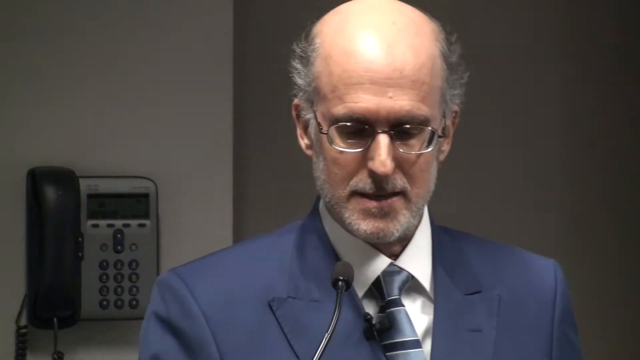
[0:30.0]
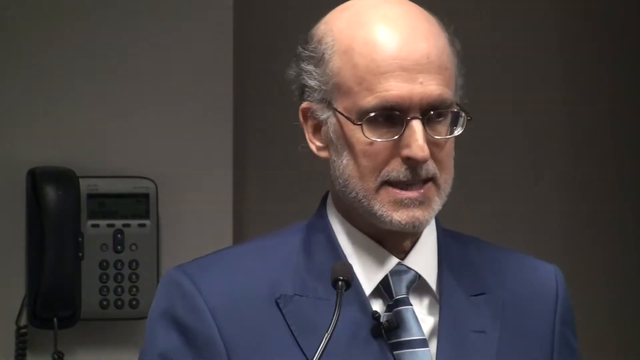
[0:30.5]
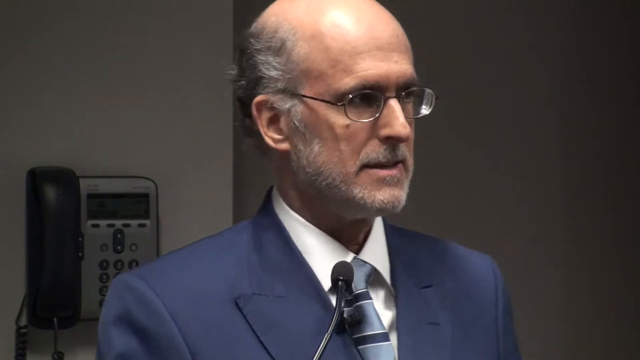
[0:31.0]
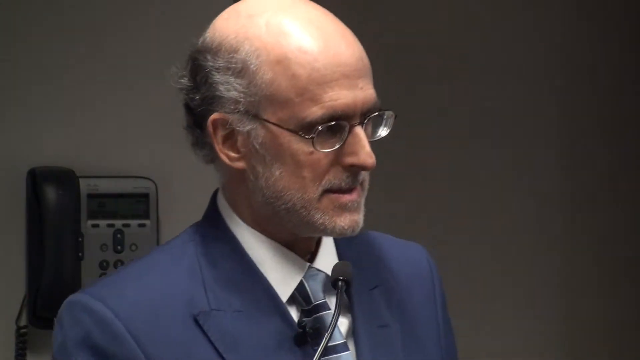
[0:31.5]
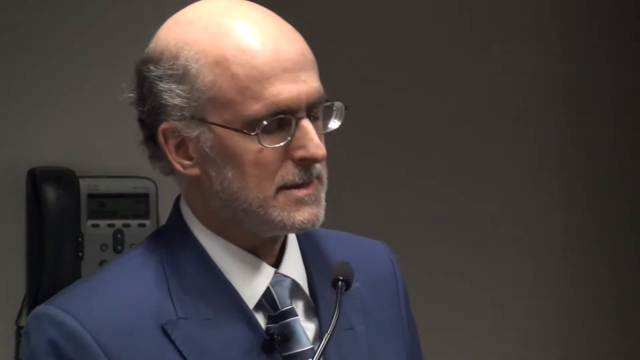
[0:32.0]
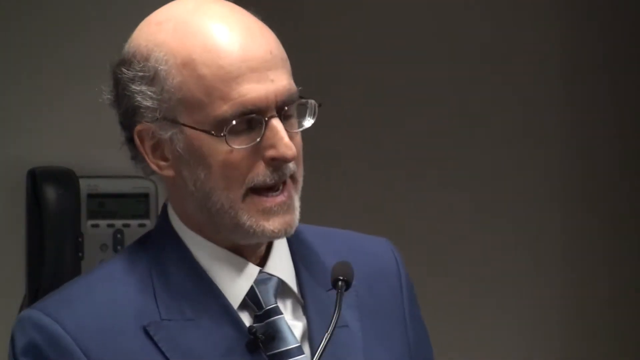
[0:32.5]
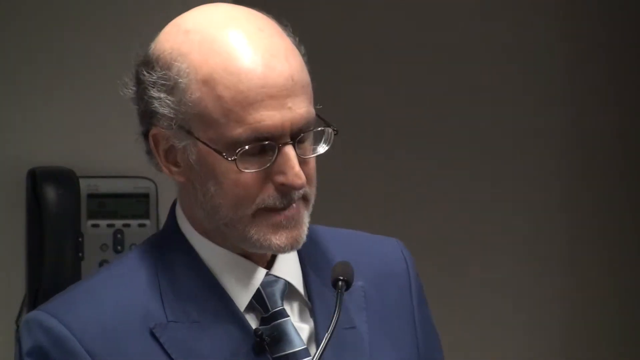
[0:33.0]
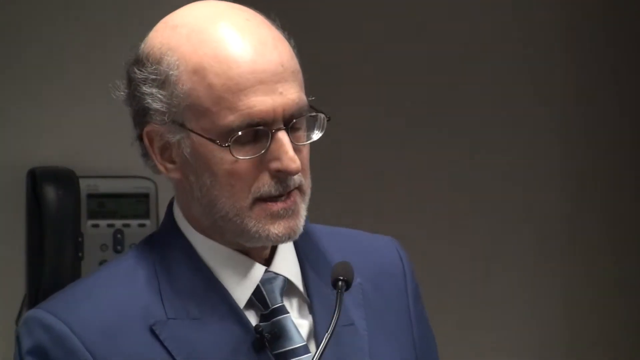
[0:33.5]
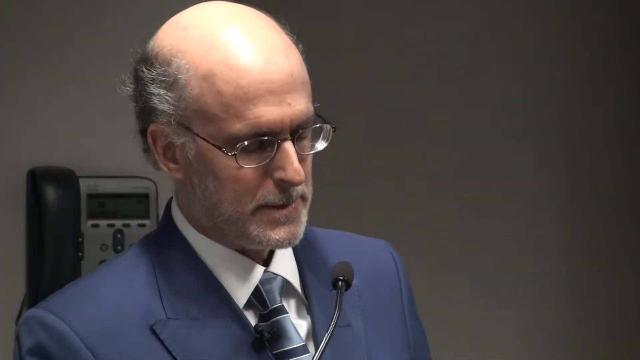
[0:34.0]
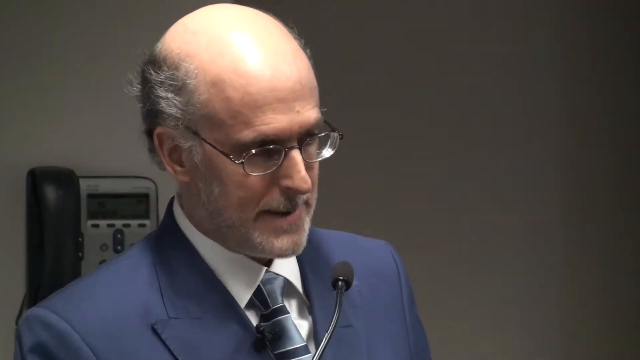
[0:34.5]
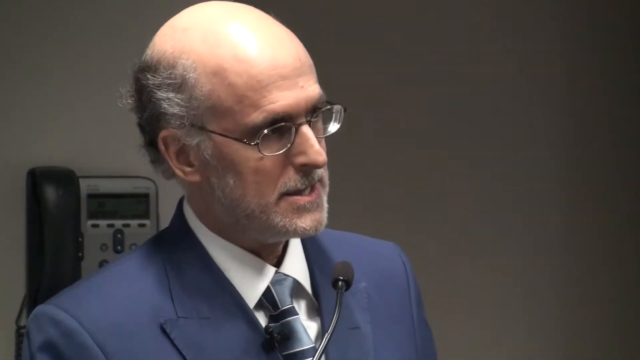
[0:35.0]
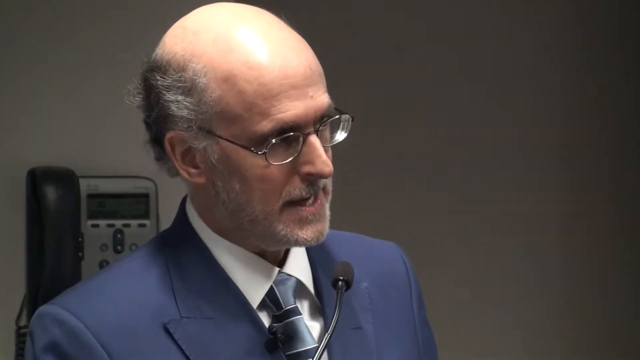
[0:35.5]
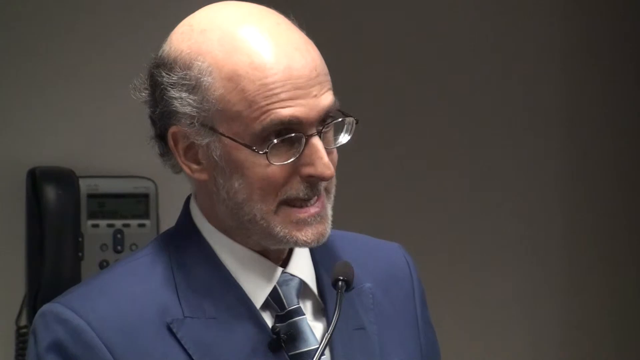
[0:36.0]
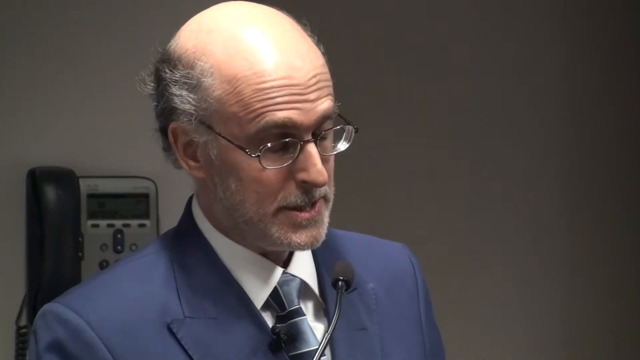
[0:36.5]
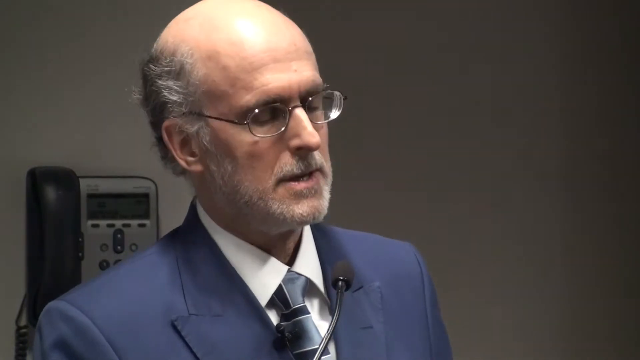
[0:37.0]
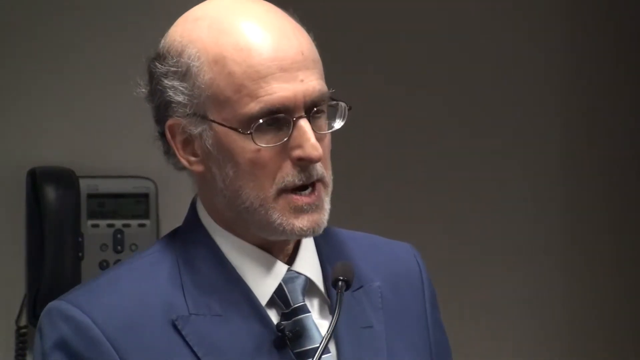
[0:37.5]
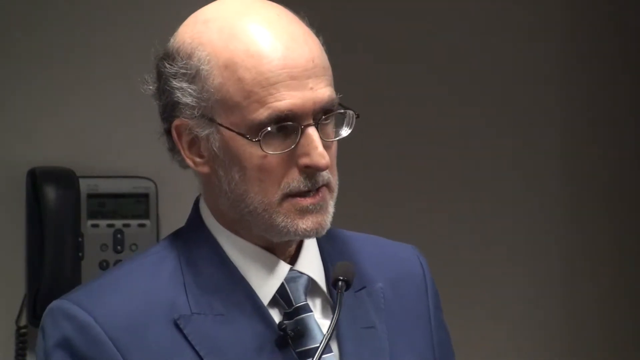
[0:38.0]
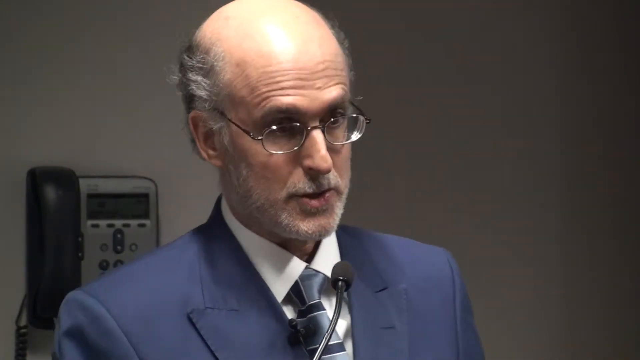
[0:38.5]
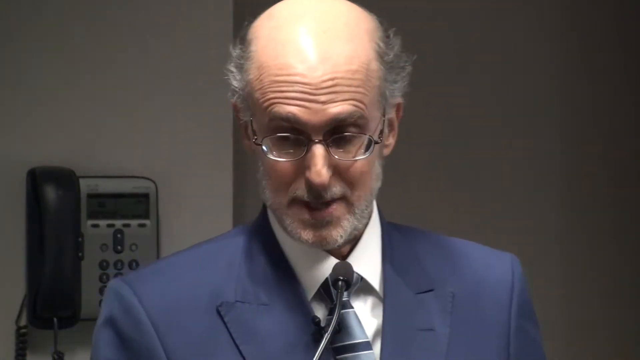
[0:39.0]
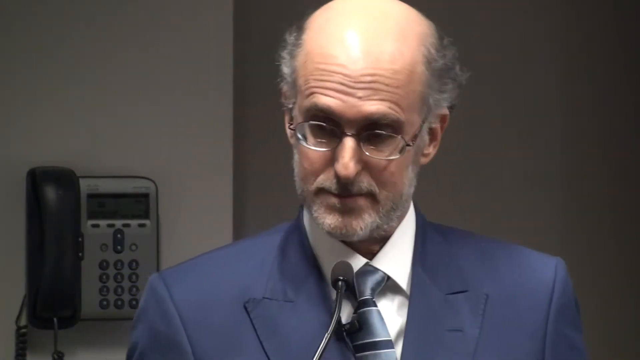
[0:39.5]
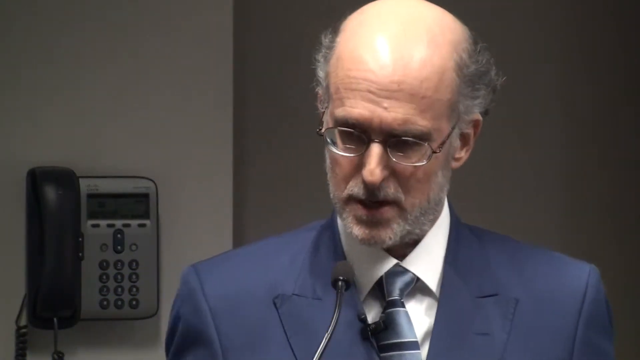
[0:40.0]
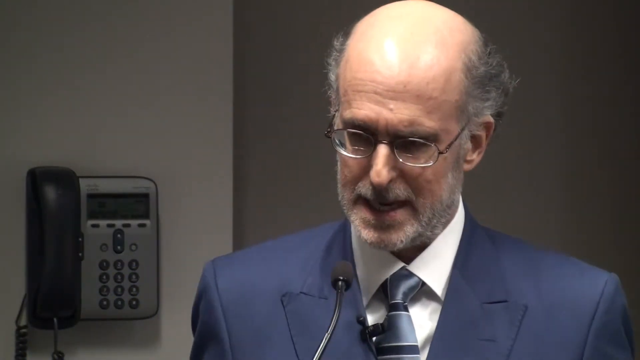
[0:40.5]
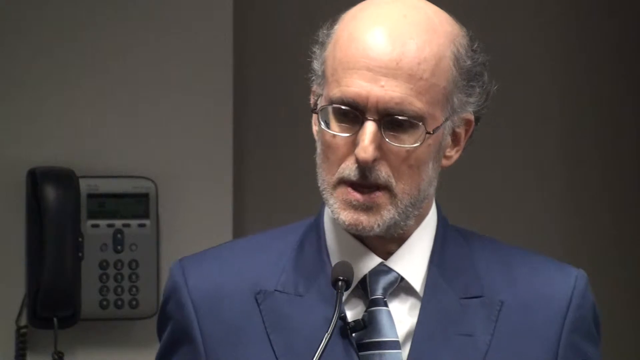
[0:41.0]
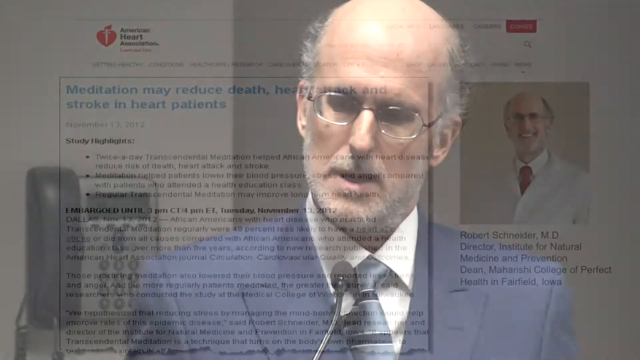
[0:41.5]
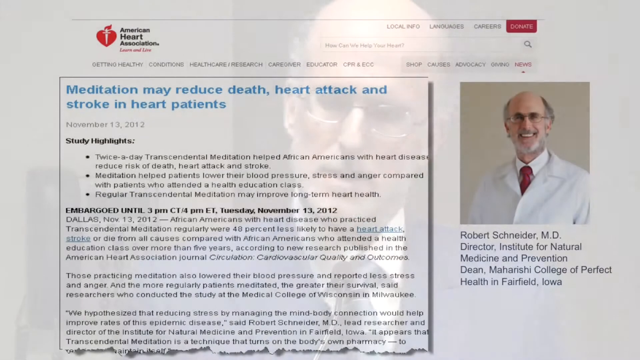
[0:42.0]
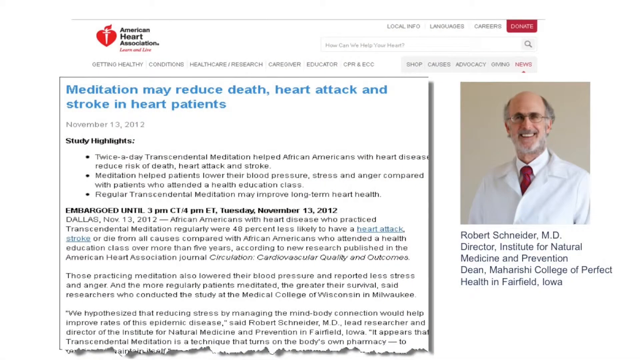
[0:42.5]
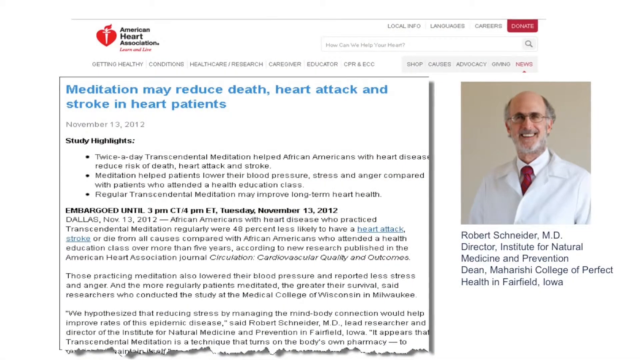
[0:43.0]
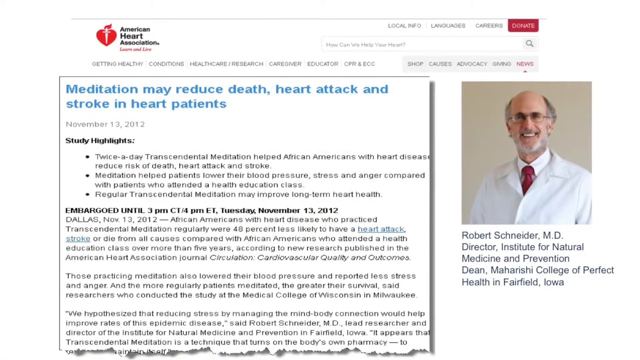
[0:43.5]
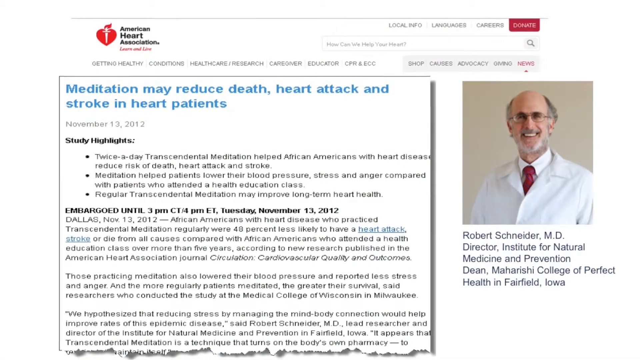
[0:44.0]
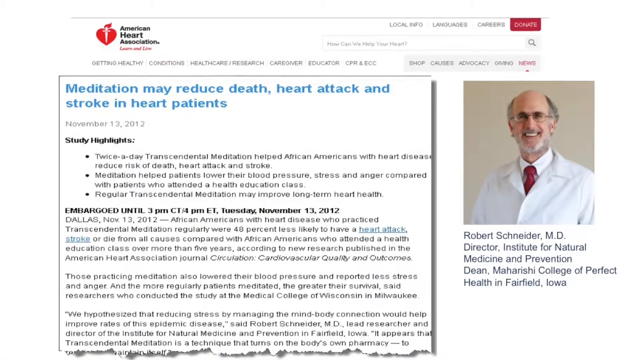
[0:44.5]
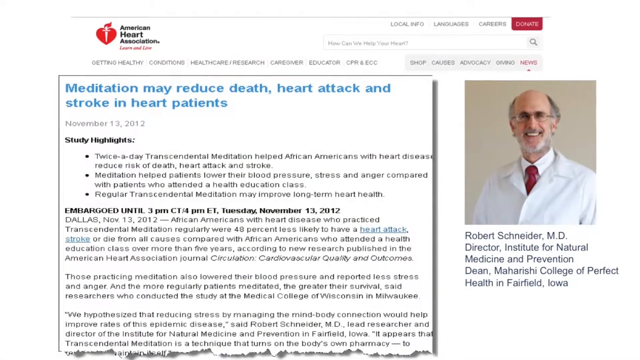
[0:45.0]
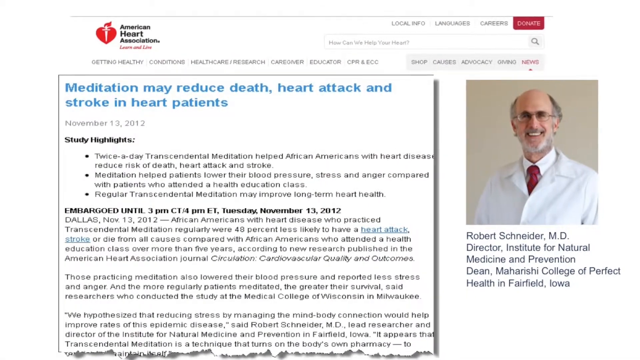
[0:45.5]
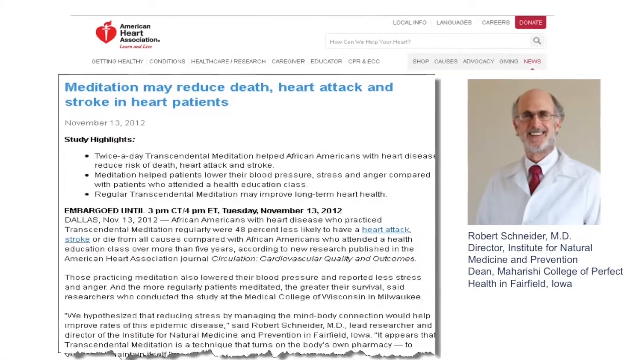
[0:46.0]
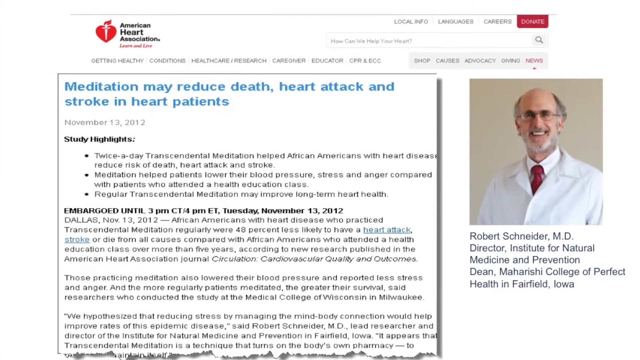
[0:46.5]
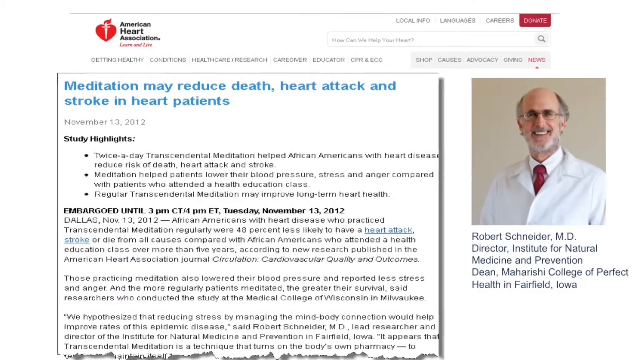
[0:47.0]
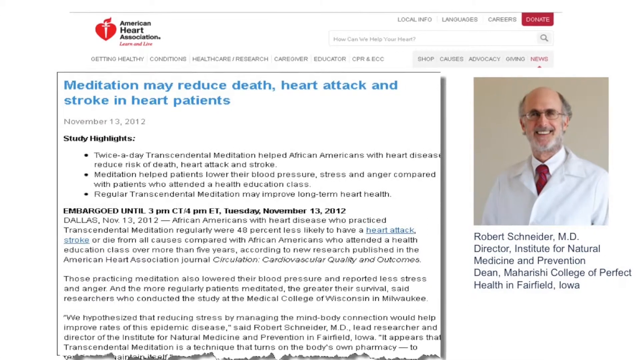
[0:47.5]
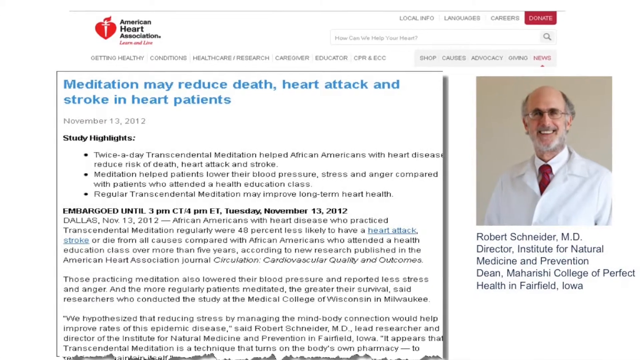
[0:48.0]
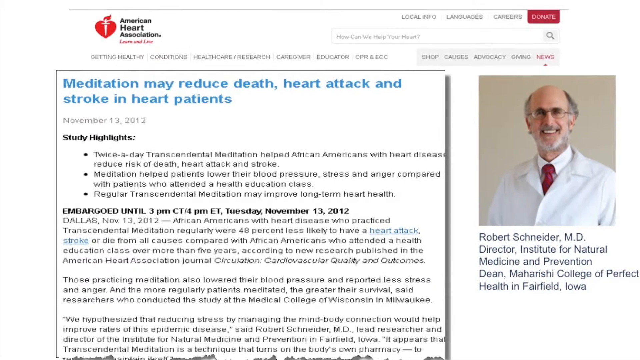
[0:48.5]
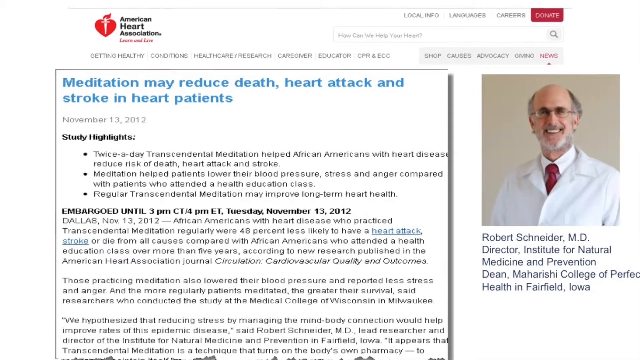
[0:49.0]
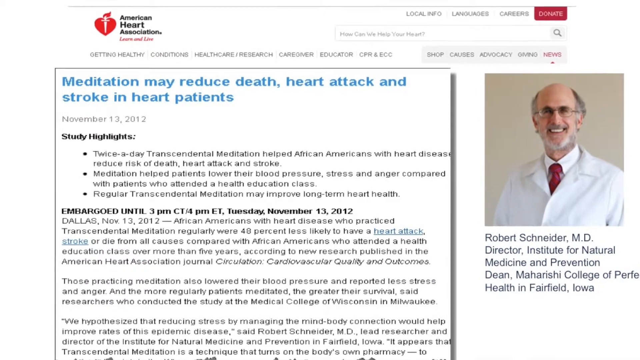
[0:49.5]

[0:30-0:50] A man wearing a blue business suit and a gray and black tie speaks into a black microphone, as if giving some kind of presentation. He looks towards the right of the screen at something off screen, moves his head up and down as he talks, and raises his eyebrows emphatically. He often closes his eyes for brief periods, as if thinking about what he is going to say. The screen then transitions to a screen grab of an informational web page from the American Heart Association with multiple lines of text. The man who was talking into the microphone is pictured on the right and is listed as "Robert Snyder, MD, Director, Institute for Natural Medicine and Prevention, Dean, Maharishi College of Perfect Health in Fairfield, Iowa." The body of the page shows an article that reads "meditation may reduce death, heart attack, and stroke in heart patients, November 13, 2012. Study highlights twice a day transcendental meditation help African-Americans with heart disease reduce risk of death, heart attack, and stroke. Meditation helps patients lower their blood pressure, stress, and anger compared with patients who attended a health education class. Regular transcendental meditation may help improve long-term health."